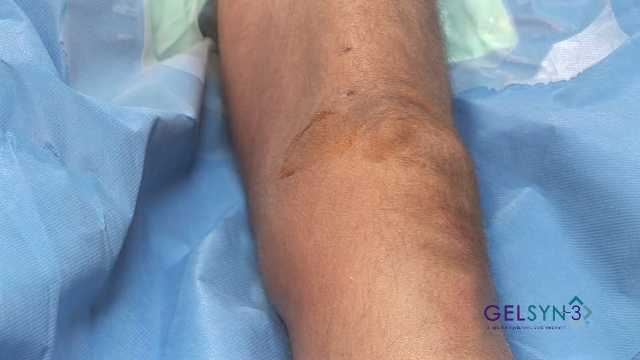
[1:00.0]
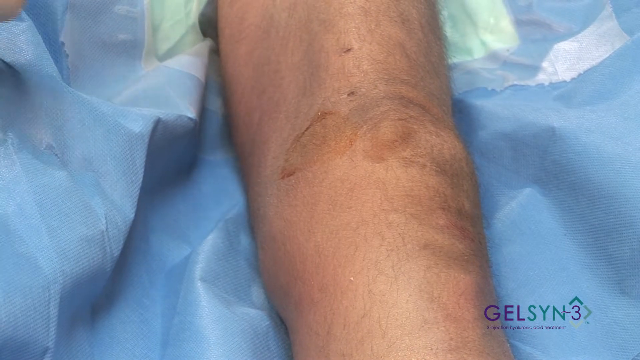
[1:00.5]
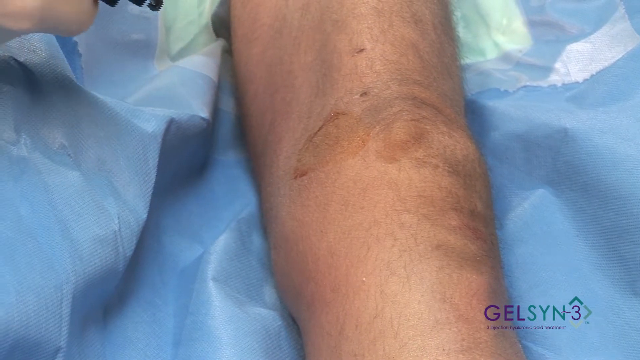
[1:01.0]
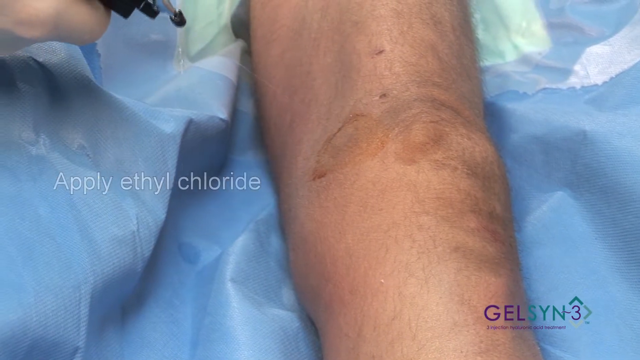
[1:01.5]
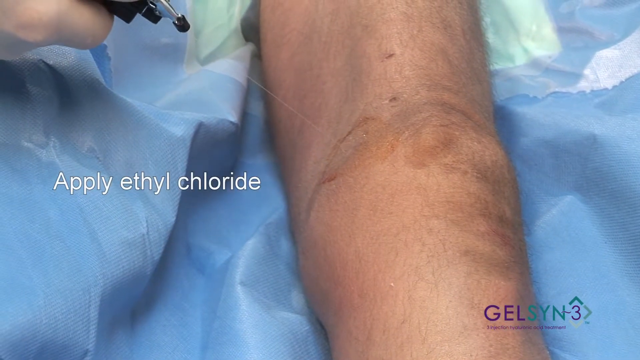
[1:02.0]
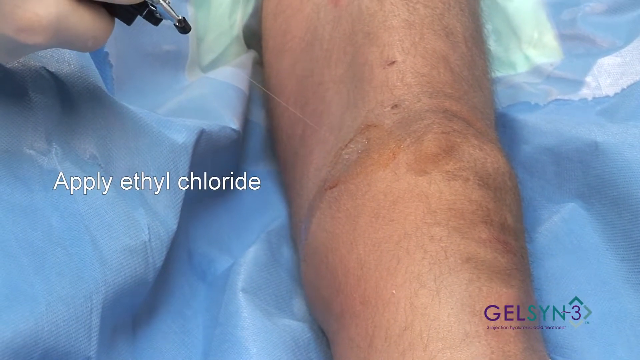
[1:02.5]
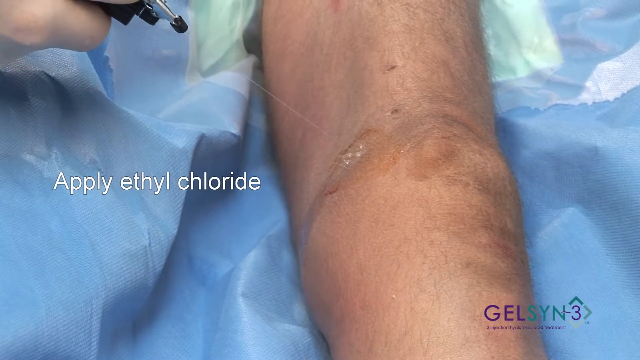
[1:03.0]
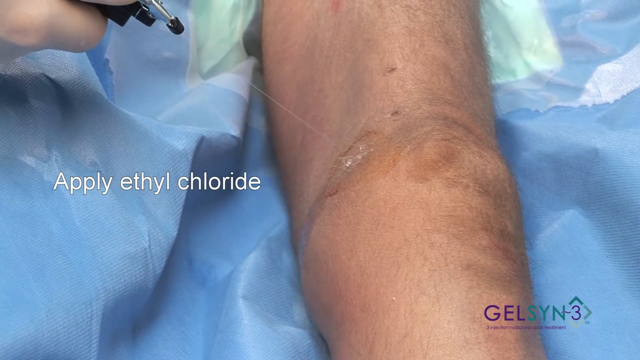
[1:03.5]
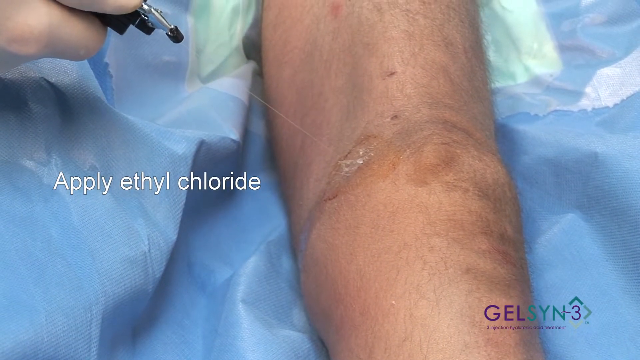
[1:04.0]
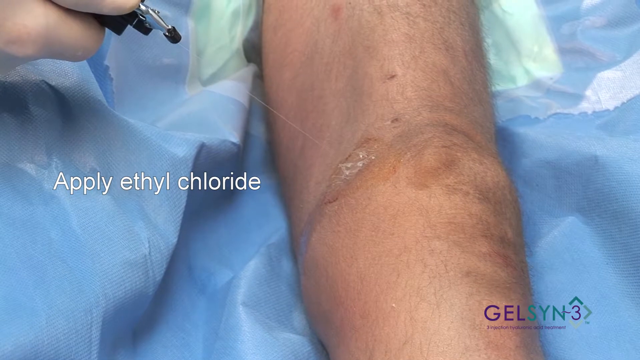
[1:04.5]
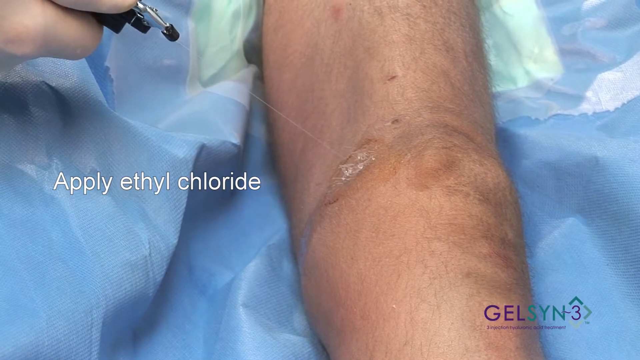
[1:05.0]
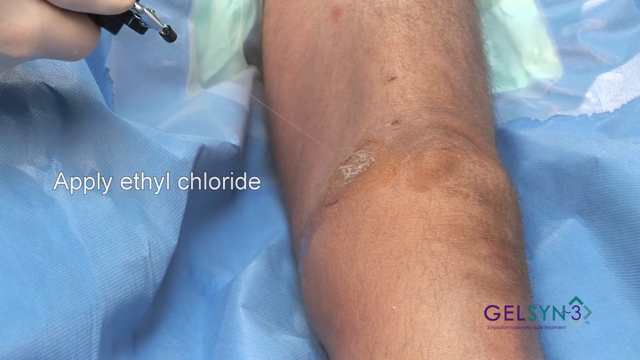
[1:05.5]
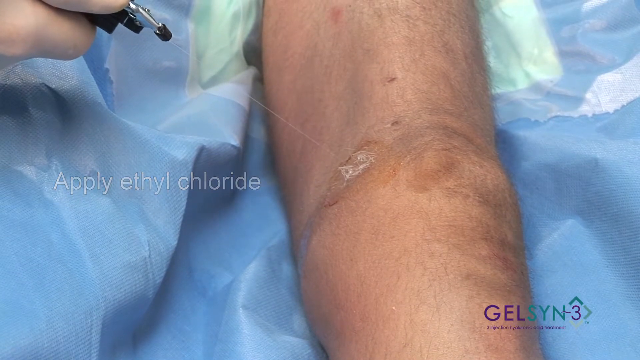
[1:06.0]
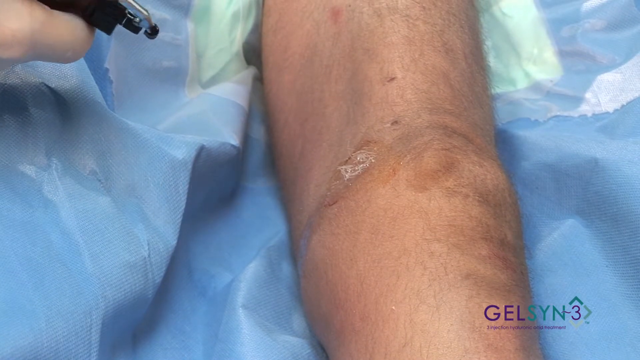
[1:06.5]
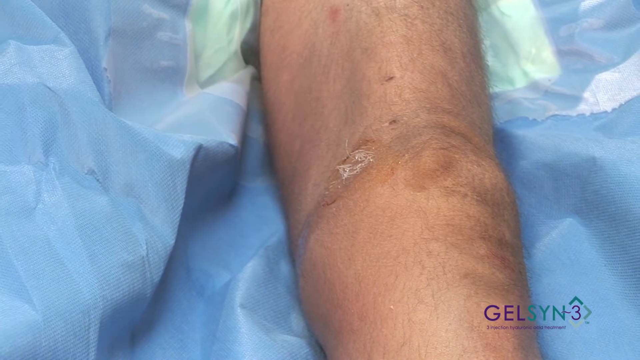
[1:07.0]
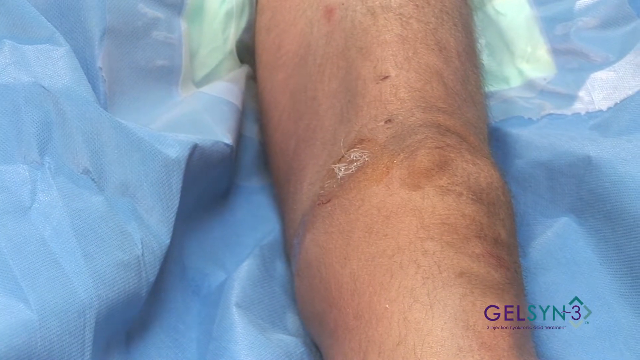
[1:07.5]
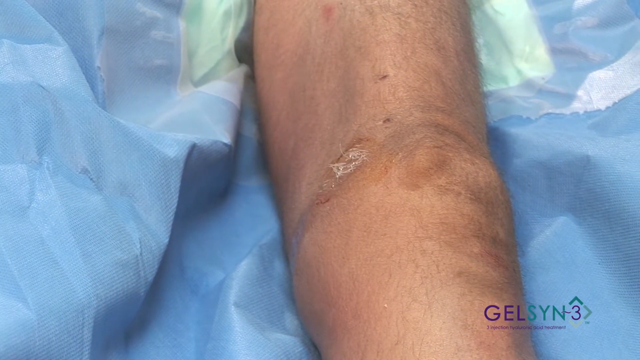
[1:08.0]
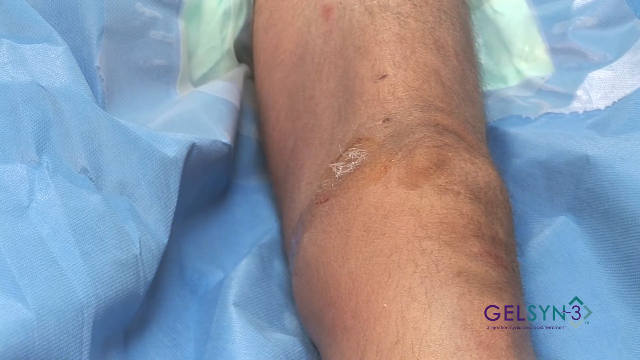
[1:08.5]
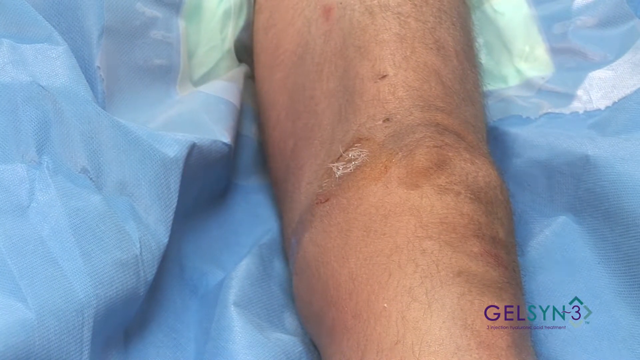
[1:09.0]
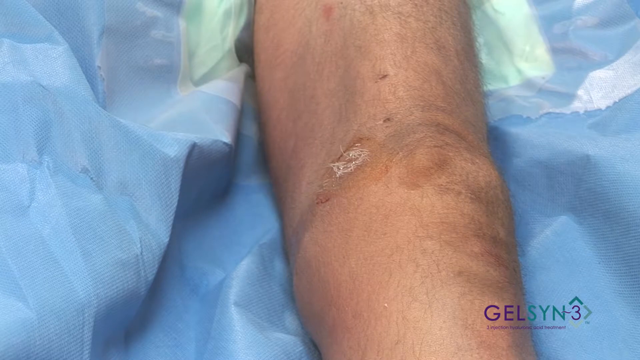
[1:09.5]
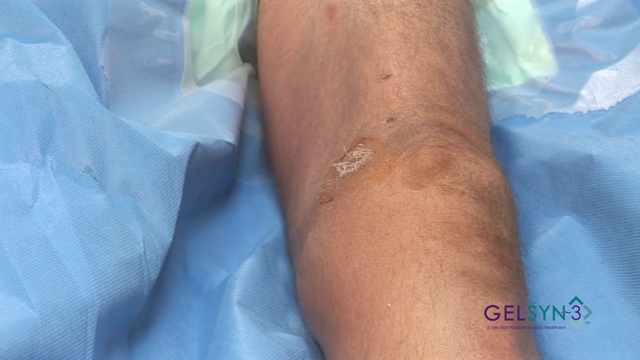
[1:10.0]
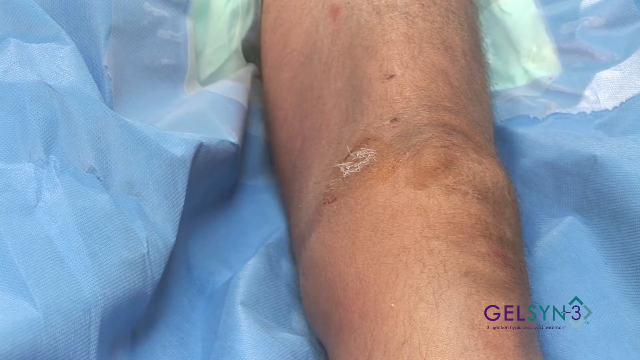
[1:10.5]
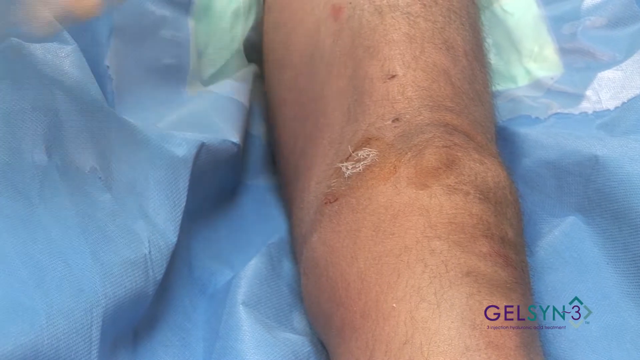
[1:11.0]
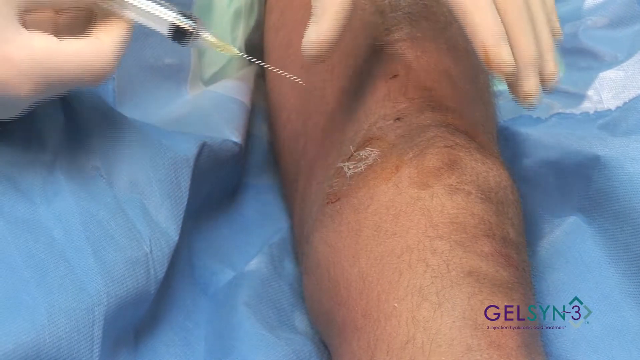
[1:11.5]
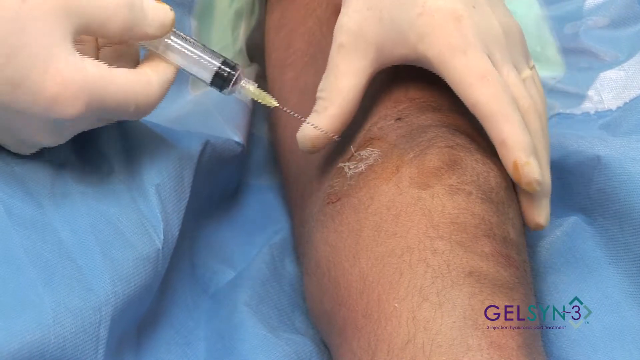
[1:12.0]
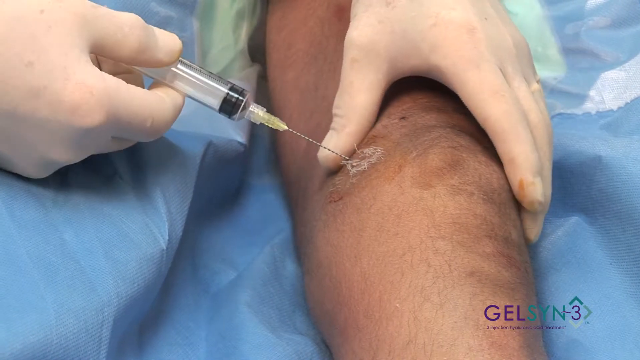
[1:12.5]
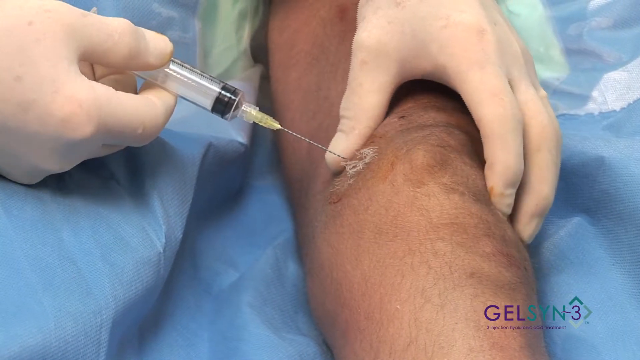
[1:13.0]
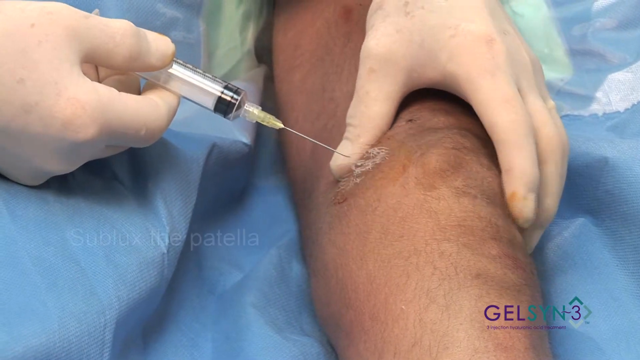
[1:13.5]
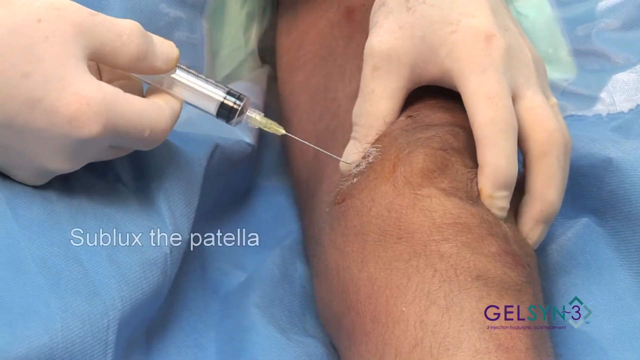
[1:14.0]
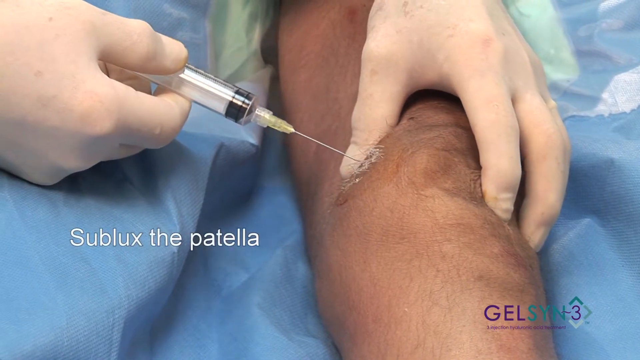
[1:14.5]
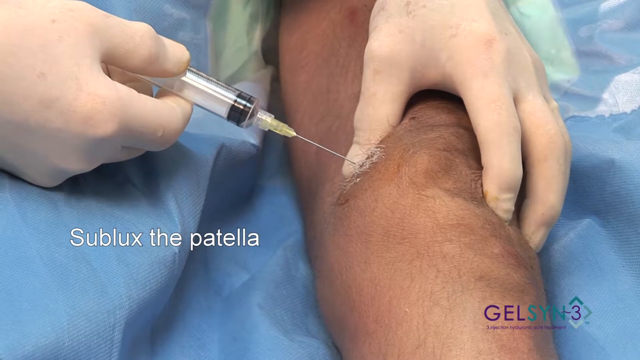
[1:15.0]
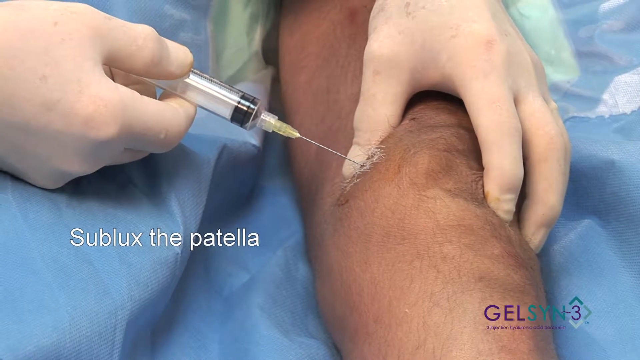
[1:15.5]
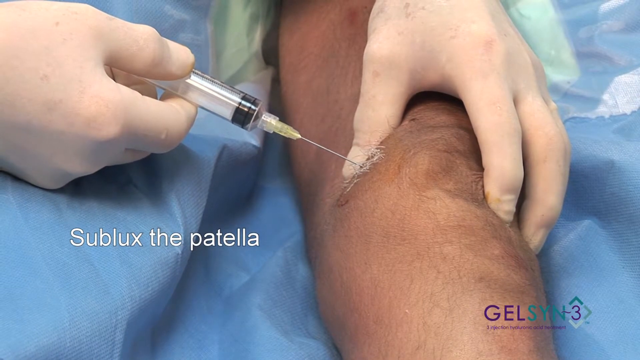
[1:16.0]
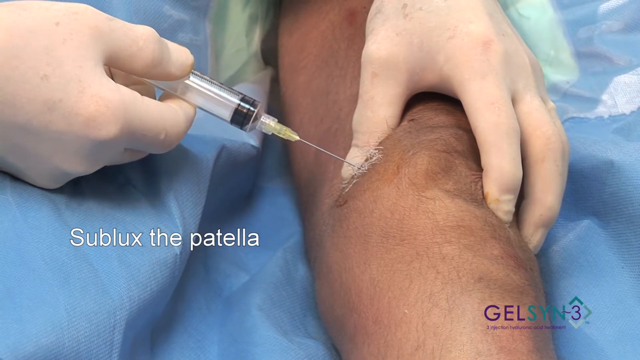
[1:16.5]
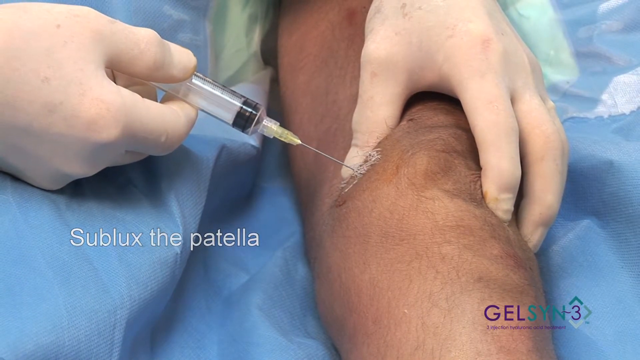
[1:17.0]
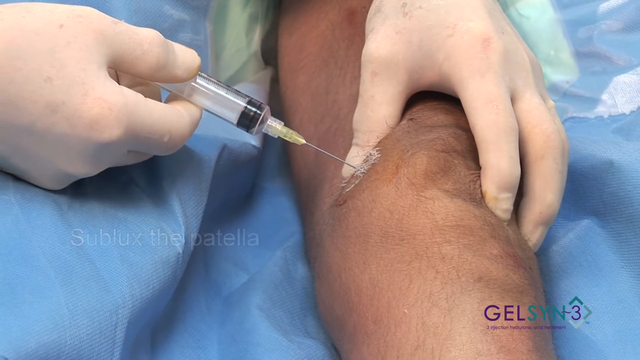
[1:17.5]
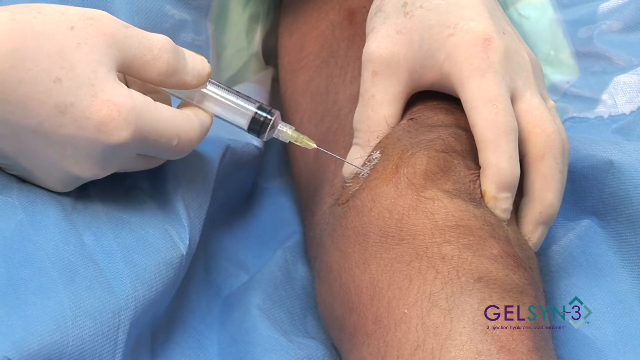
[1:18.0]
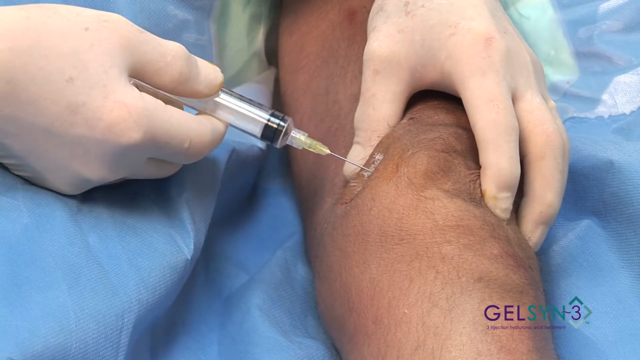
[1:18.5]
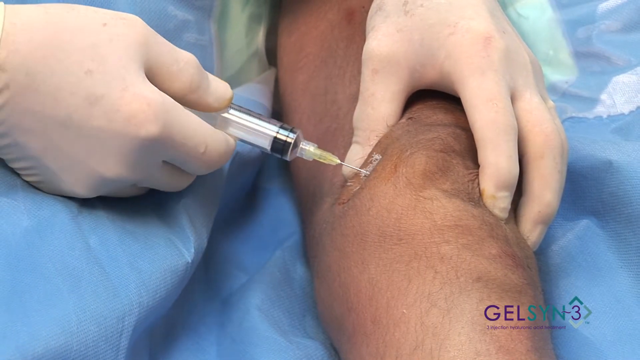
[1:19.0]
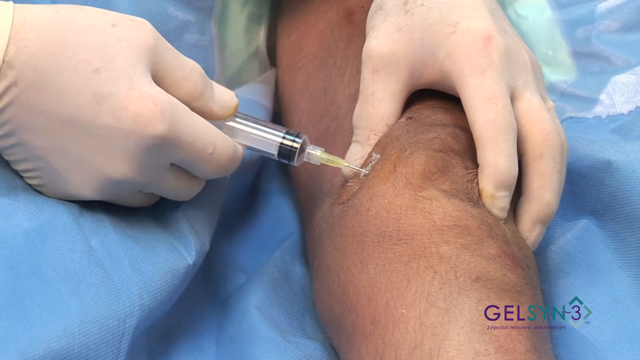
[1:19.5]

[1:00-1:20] No hands are on camera at first. Then on the left, a left hand holds what almost looks like a small squirt-gun-type device with a squirt nozzle top, and text says "apply ethyl chloride." Held a little away from the knee, it squirts a thin stream of liquid onto the same prepared area; the nozzle tip is black, and just a few fingers show at the upper left. The nozzle leaves the frame, and the hands return: the left hand holds the top of the knee while the right hand holds a clear syringe with a long needle and a black stopper, inserting the needle deep into the prepared area. White text reads "sublux the patella." The black stopper shows little movement yet.